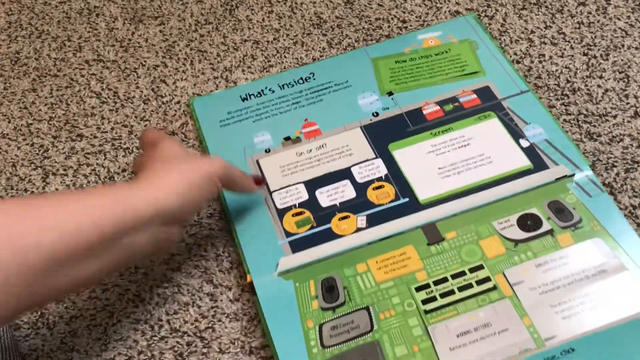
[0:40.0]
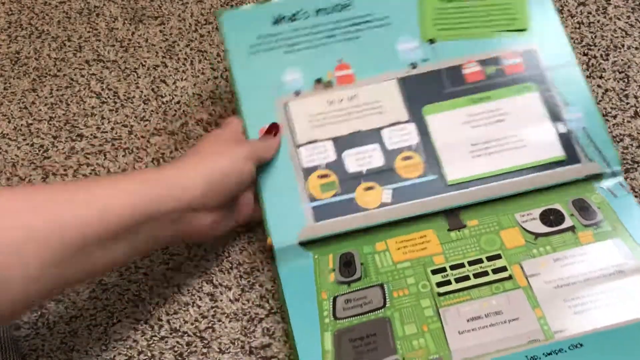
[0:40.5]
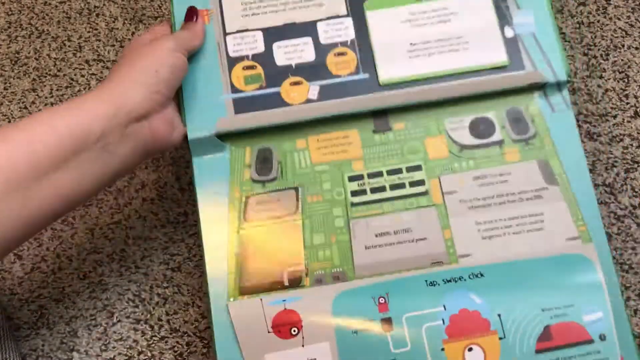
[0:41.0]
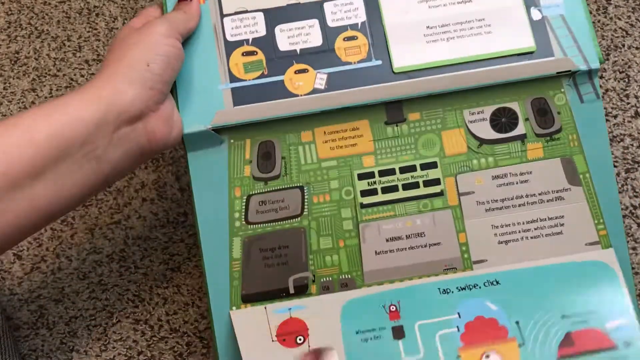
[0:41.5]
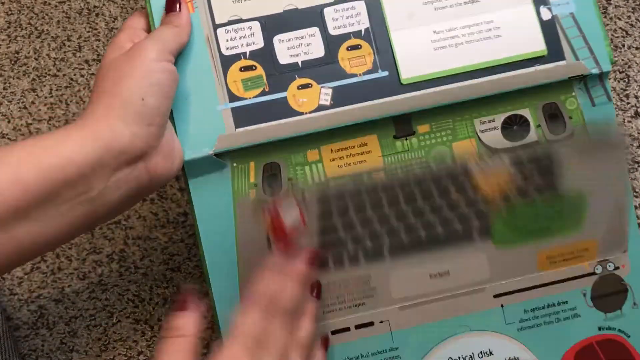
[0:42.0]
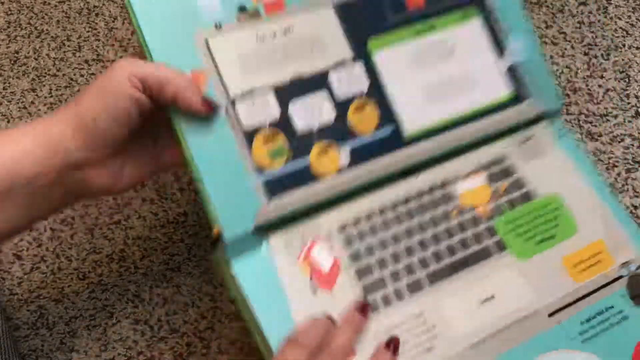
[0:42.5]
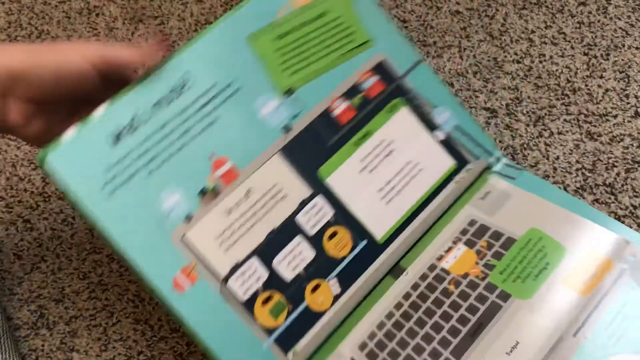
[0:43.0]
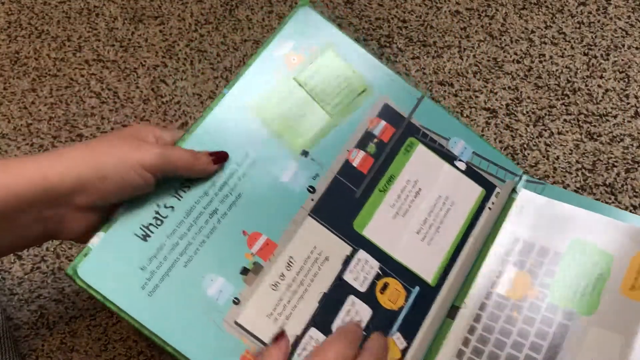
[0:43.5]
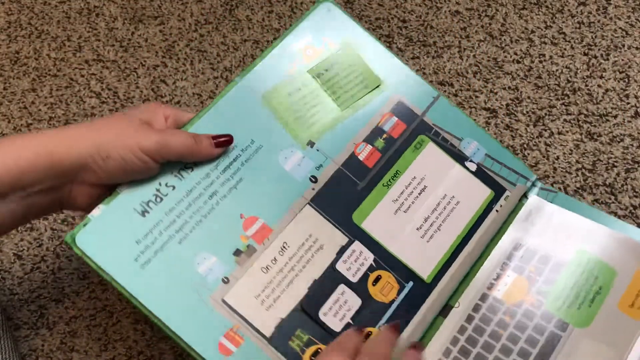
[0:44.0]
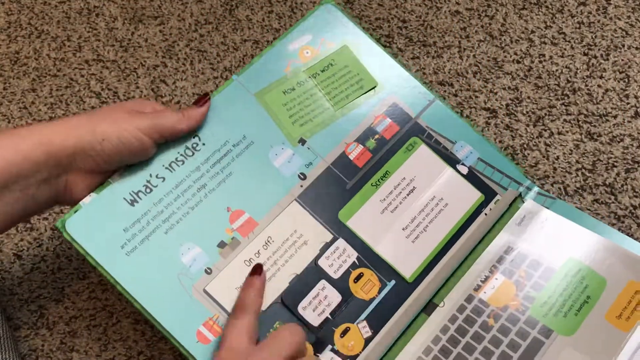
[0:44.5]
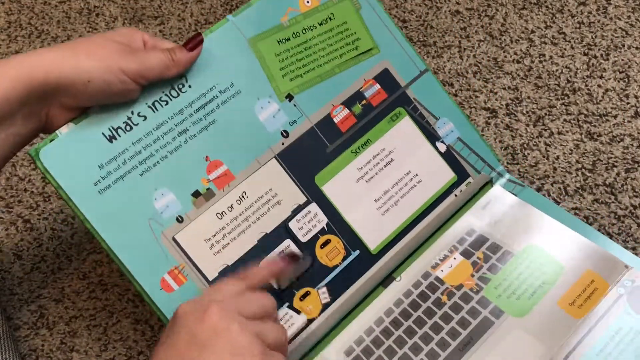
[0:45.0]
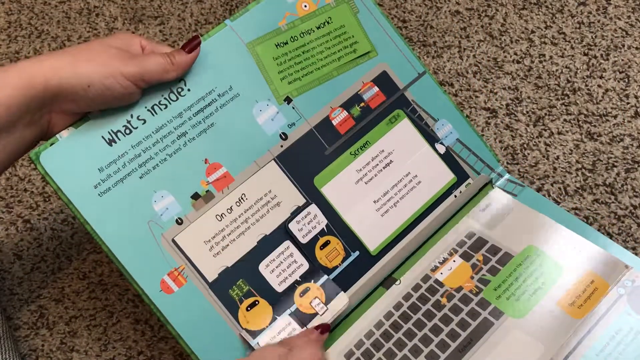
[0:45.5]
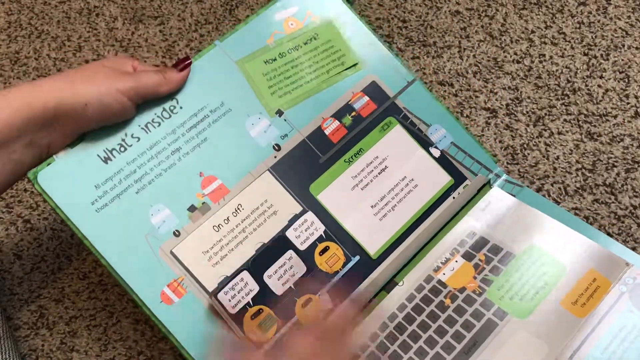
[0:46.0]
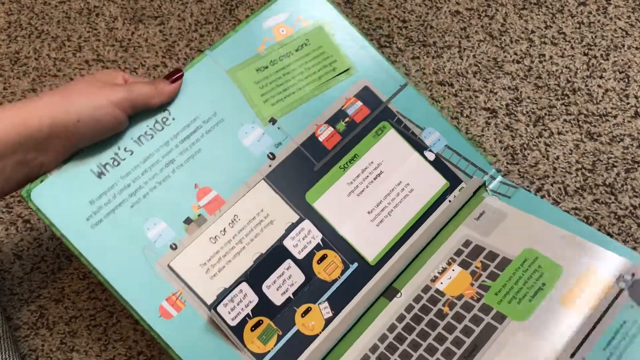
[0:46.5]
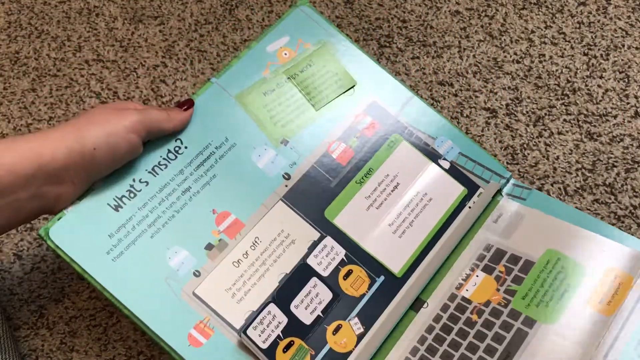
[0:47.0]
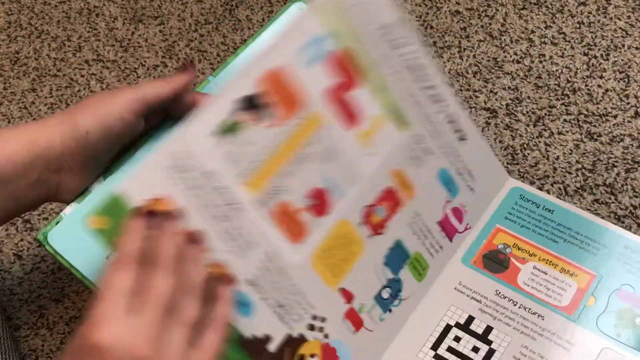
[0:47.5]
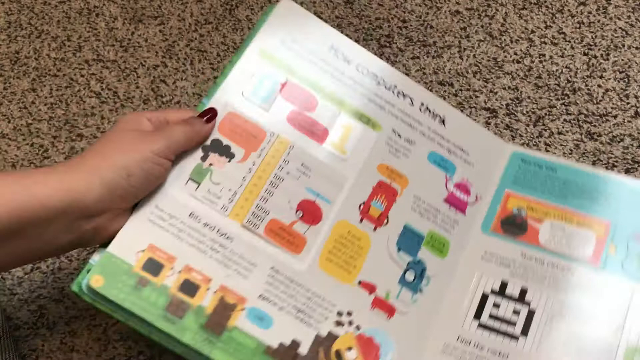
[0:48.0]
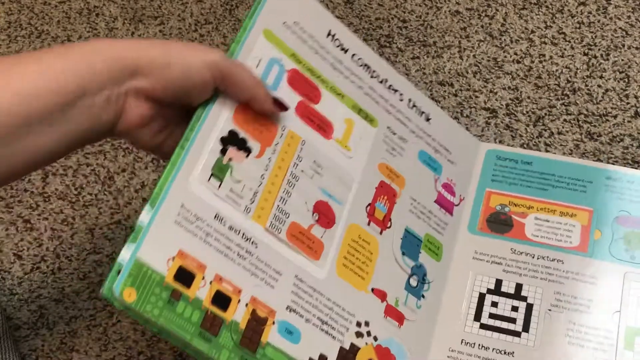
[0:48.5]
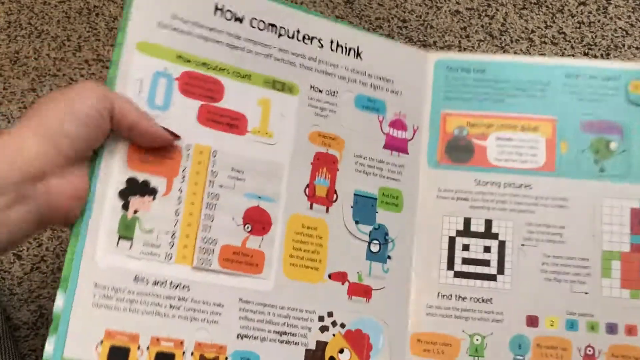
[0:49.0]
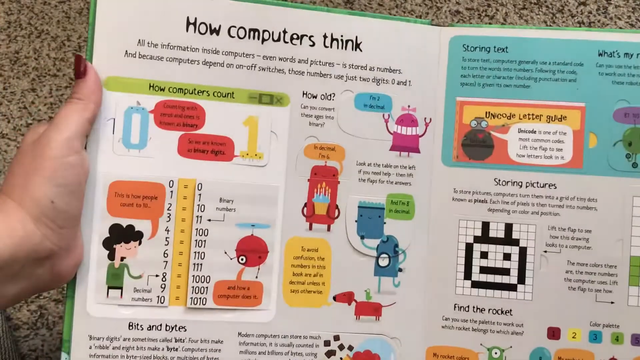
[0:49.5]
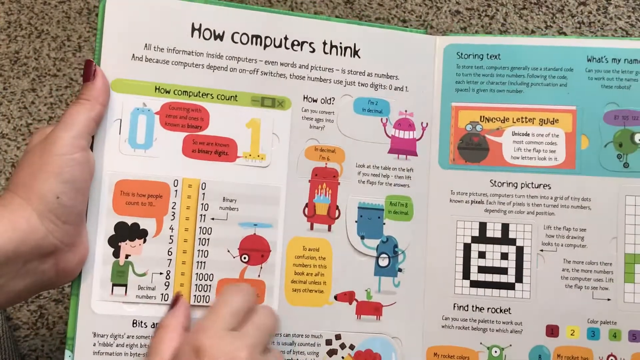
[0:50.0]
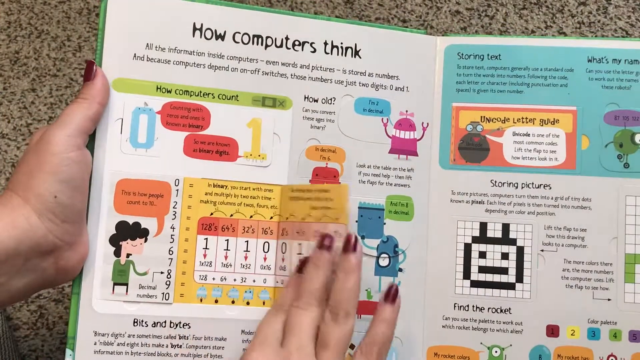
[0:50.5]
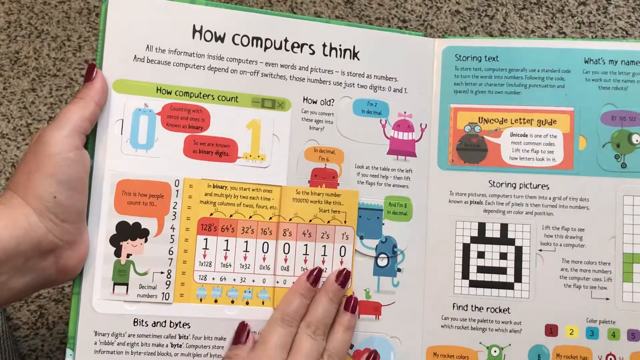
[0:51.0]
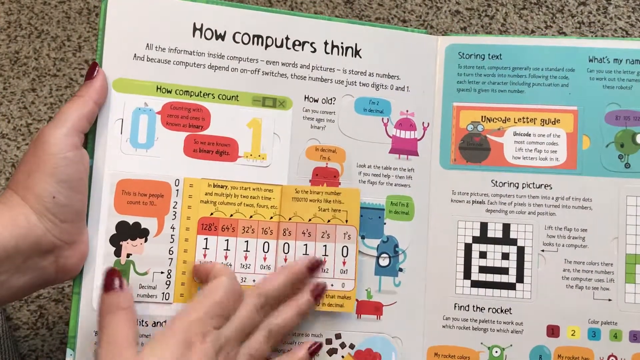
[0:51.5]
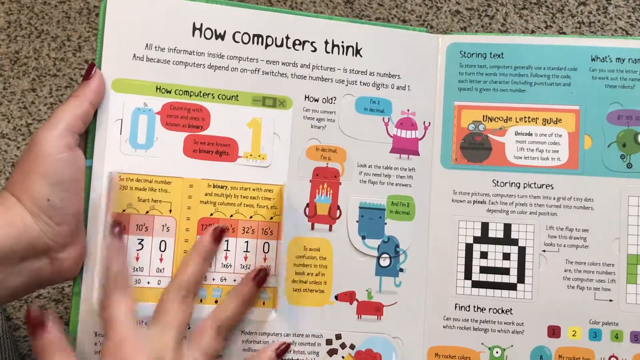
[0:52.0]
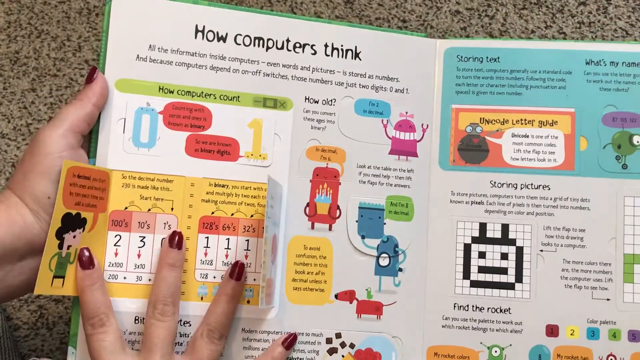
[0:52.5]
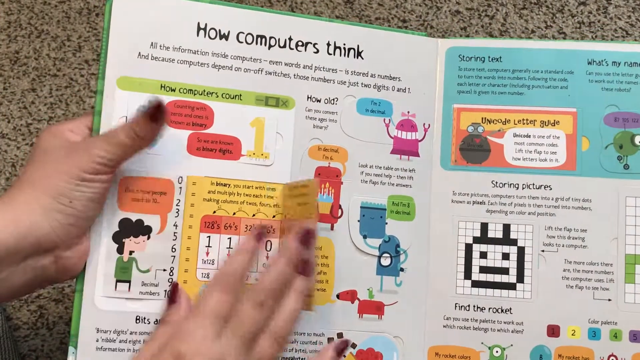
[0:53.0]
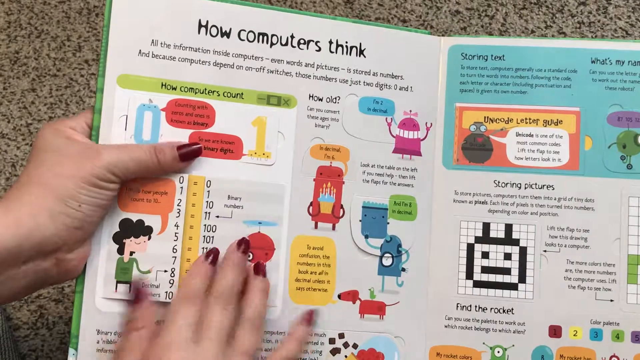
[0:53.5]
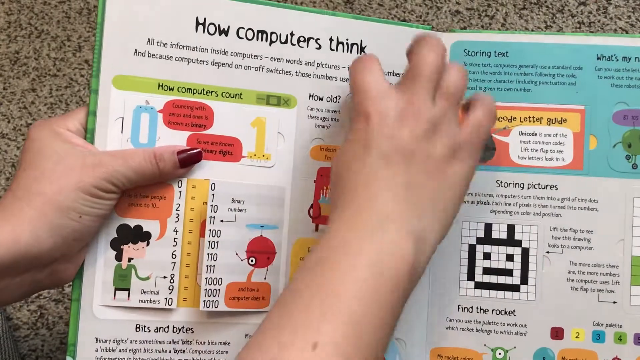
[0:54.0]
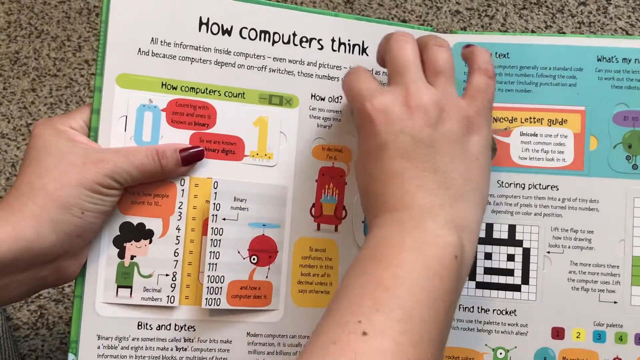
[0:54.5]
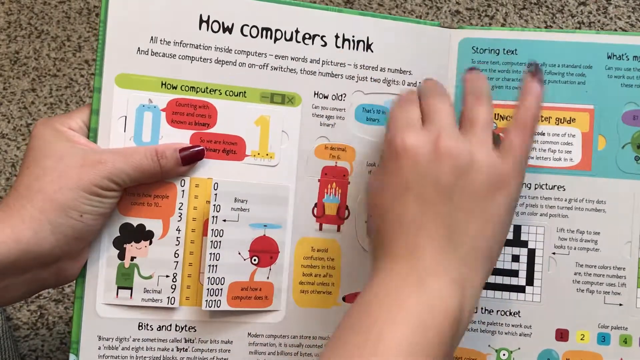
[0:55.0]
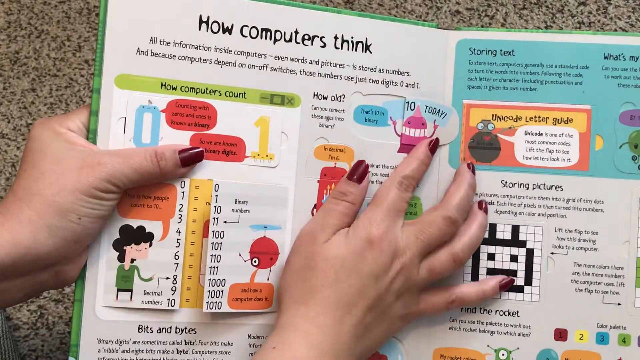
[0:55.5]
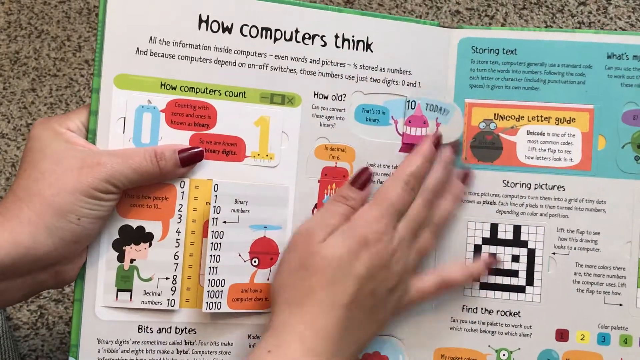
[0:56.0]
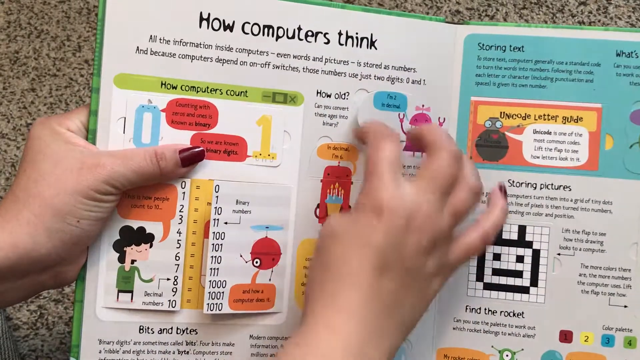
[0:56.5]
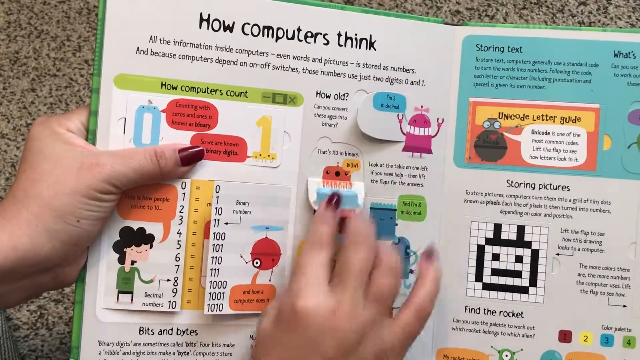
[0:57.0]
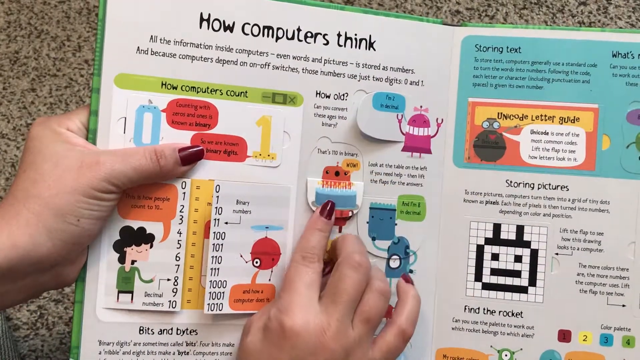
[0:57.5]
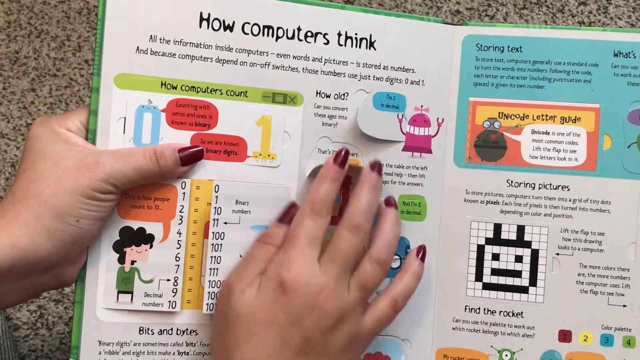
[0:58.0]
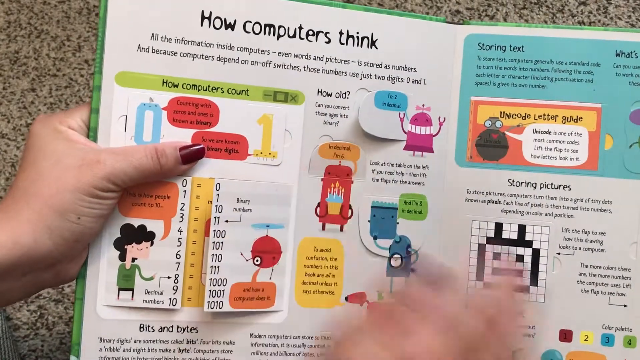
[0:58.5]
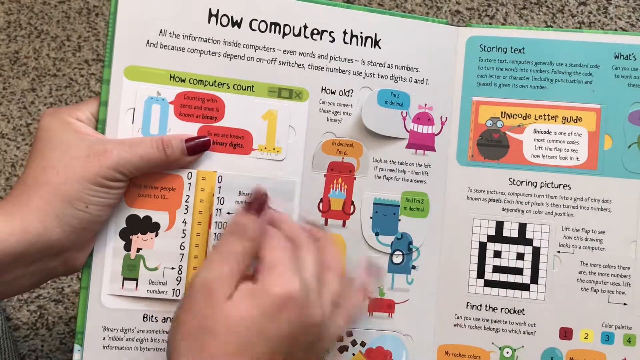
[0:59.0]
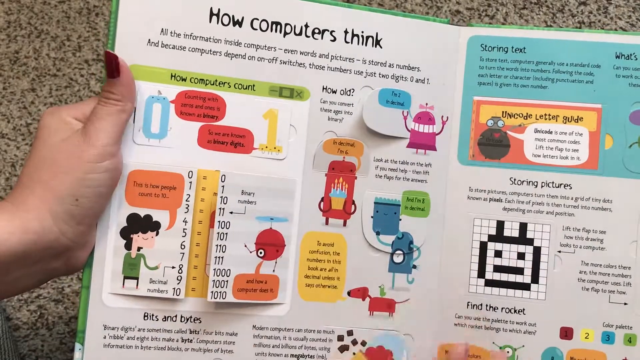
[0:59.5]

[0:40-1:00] The woman puts everything back, which shows the underside of a laptop keyboard with a few friendly robots sitting on top of the keys. She flips the book back, pulls the flap down on some round, yellow robots, flips the middle robot, and turns the page. The next page is "How computers think". It has a yellow chart with a list of numbers, 1-1-0-1-1. She flips it to show the inside of that flap, another chart with the number sequence 1-1-0-1-1. She then flips a purple robot in the top right corner of the page to reveal a talk bubble under it, and also flips a red robot holding a cupcake to see what is underneath.